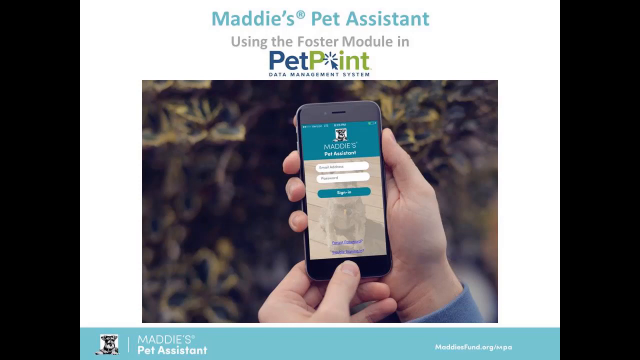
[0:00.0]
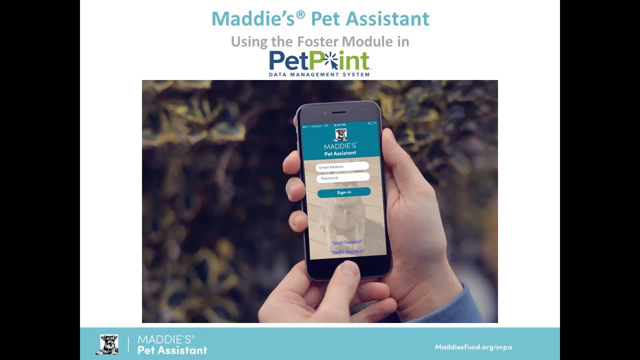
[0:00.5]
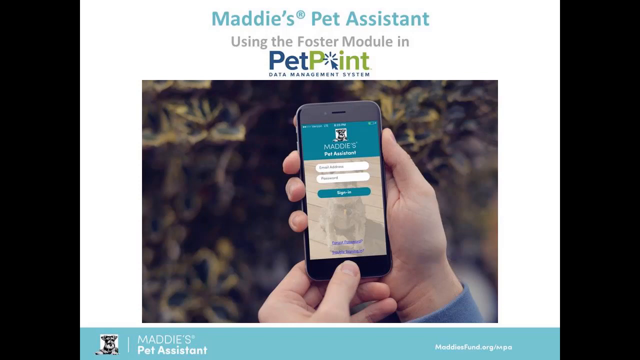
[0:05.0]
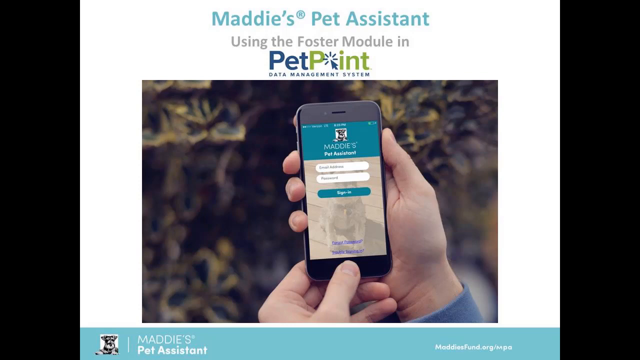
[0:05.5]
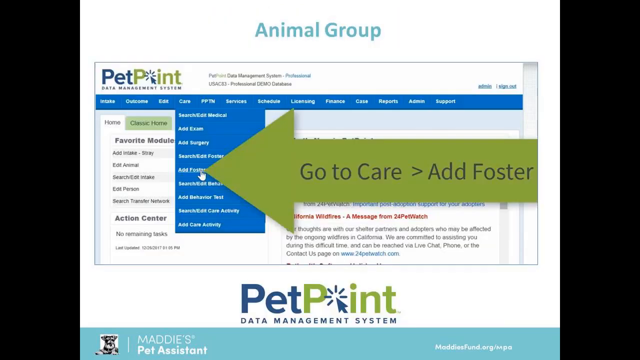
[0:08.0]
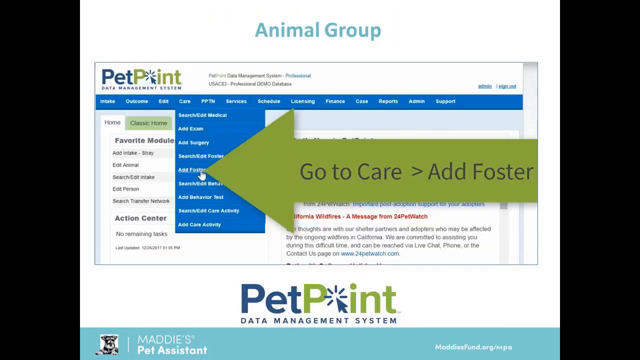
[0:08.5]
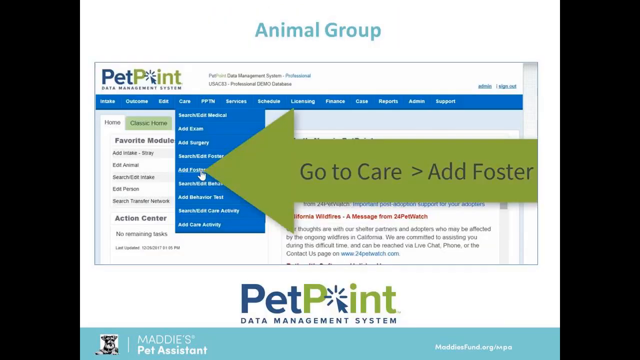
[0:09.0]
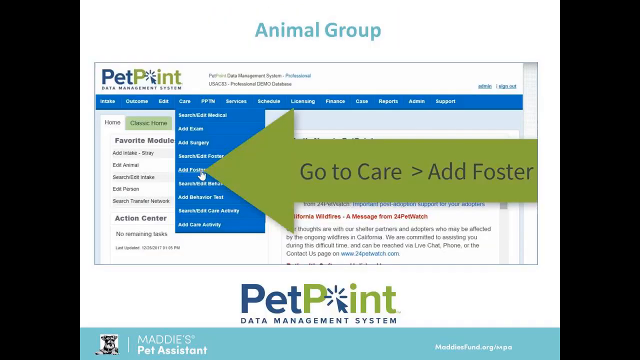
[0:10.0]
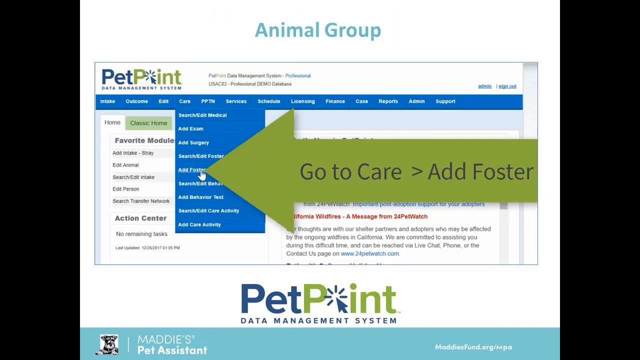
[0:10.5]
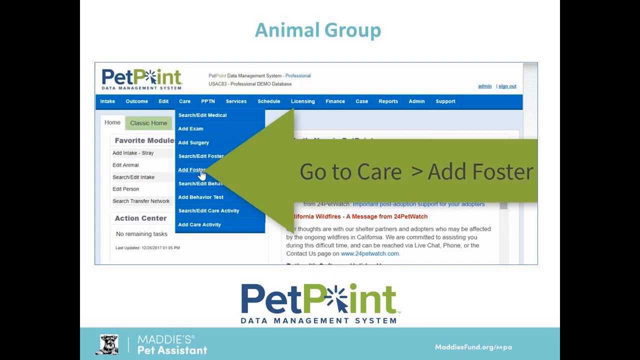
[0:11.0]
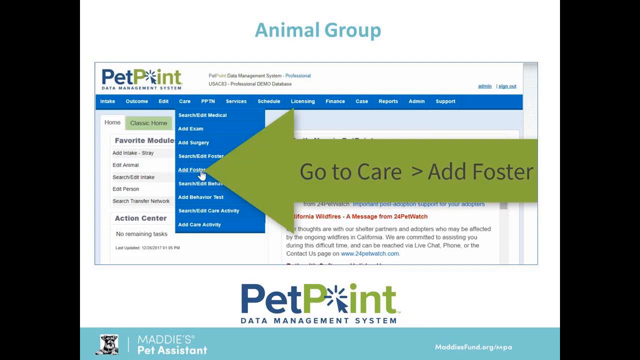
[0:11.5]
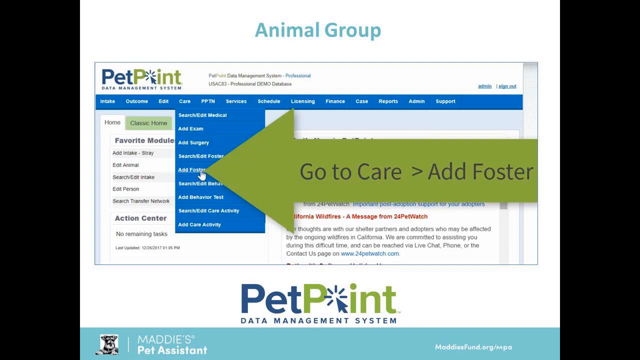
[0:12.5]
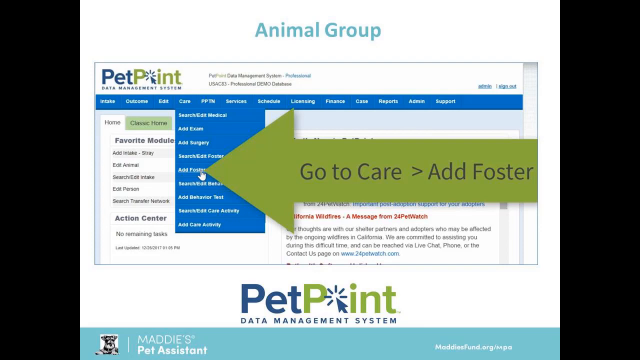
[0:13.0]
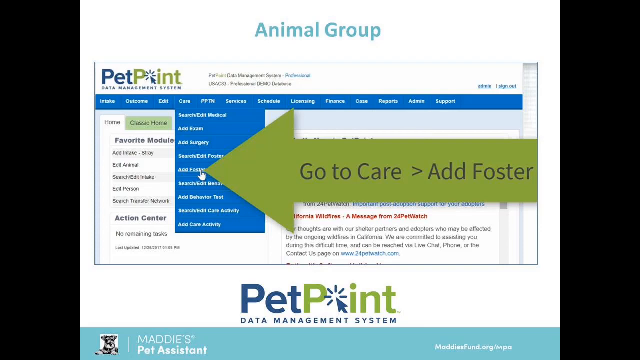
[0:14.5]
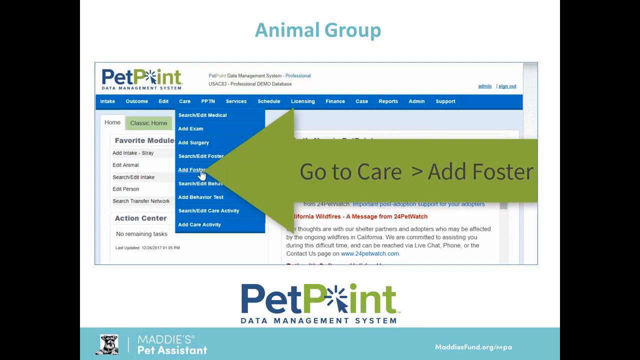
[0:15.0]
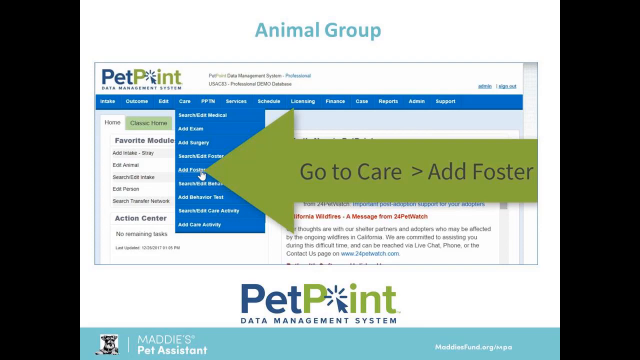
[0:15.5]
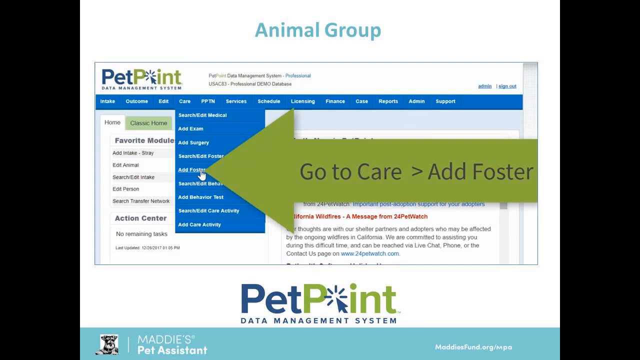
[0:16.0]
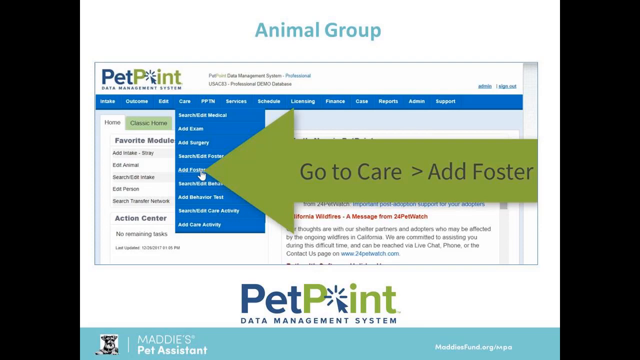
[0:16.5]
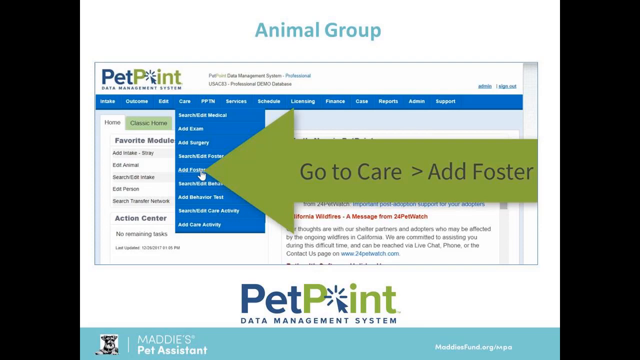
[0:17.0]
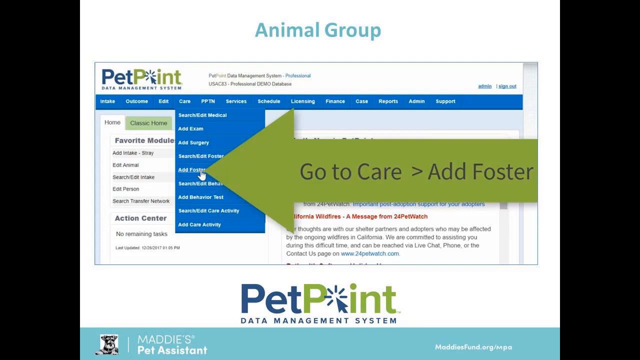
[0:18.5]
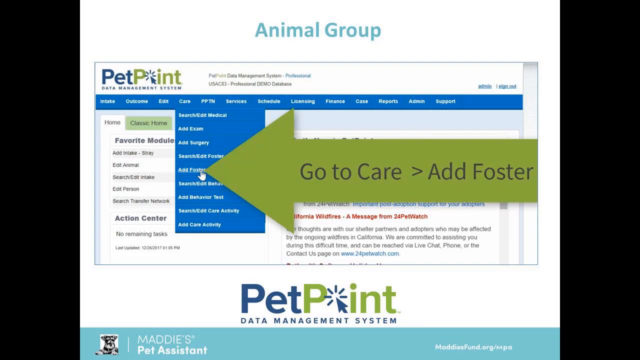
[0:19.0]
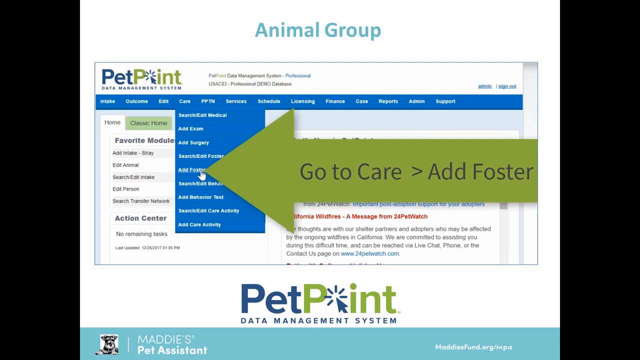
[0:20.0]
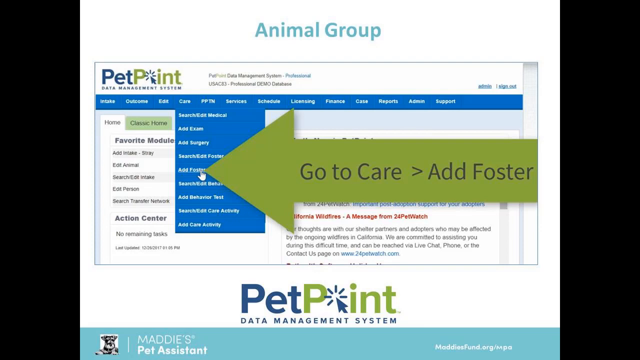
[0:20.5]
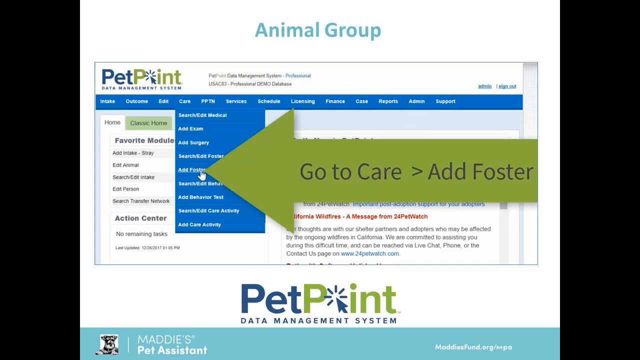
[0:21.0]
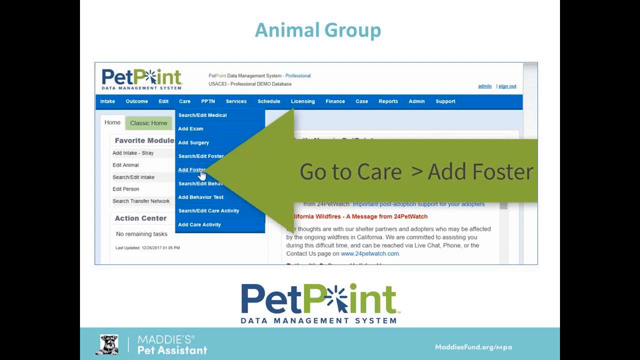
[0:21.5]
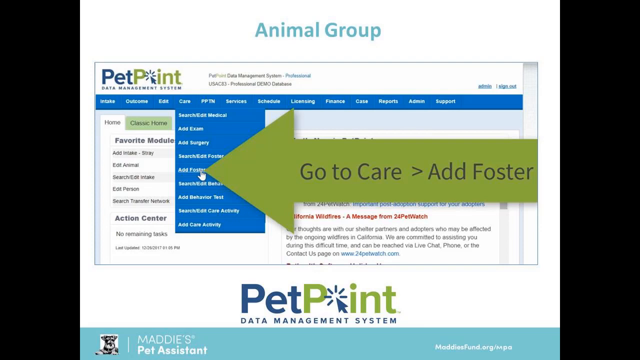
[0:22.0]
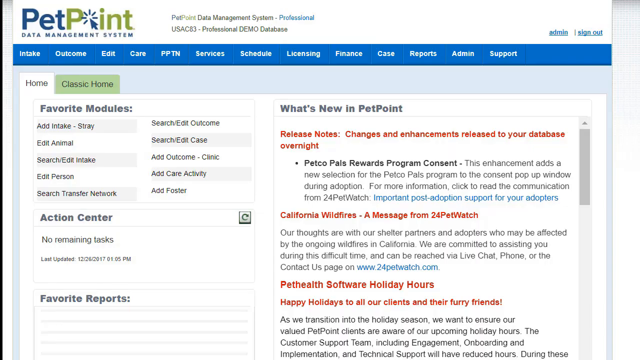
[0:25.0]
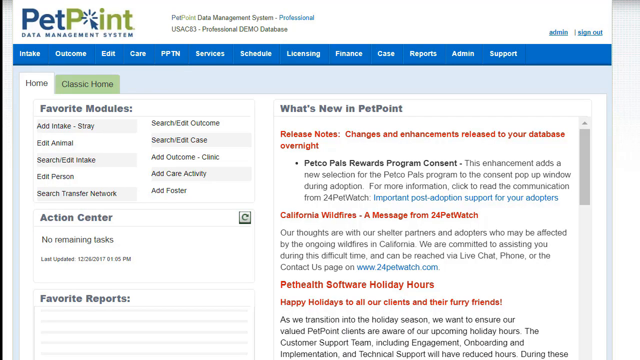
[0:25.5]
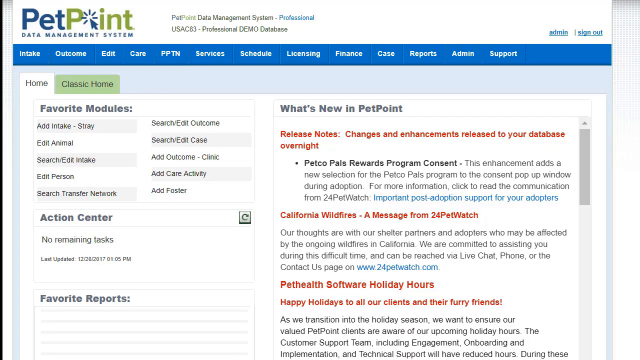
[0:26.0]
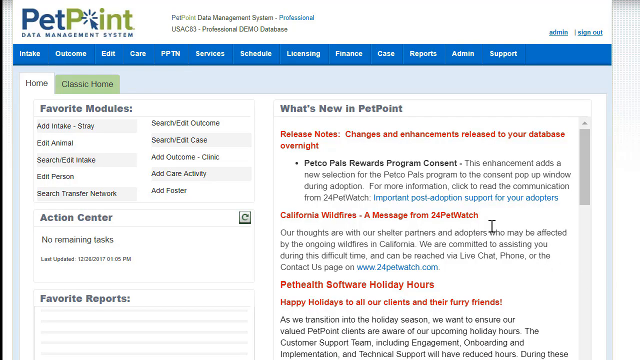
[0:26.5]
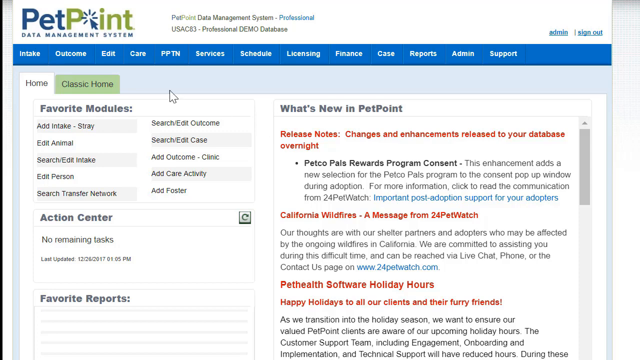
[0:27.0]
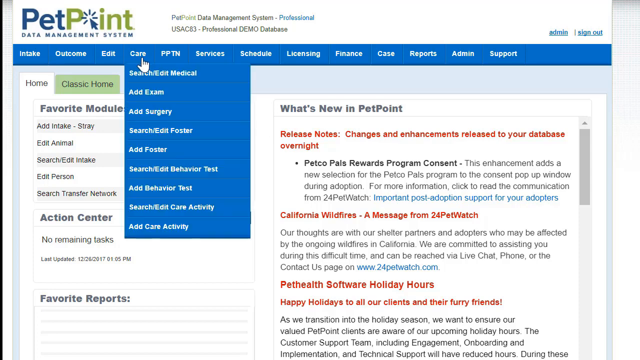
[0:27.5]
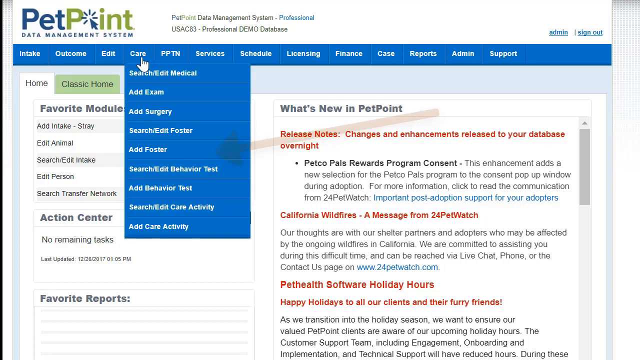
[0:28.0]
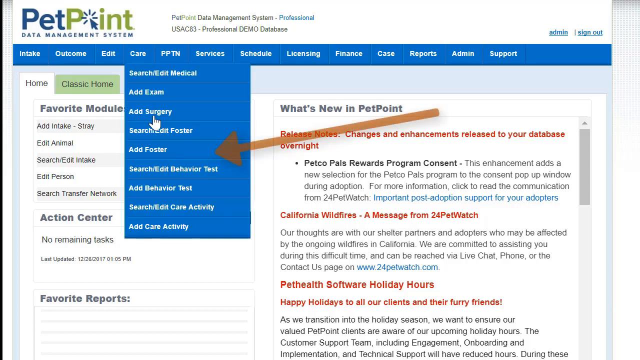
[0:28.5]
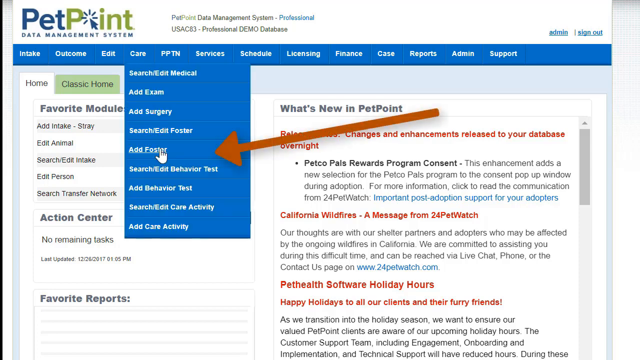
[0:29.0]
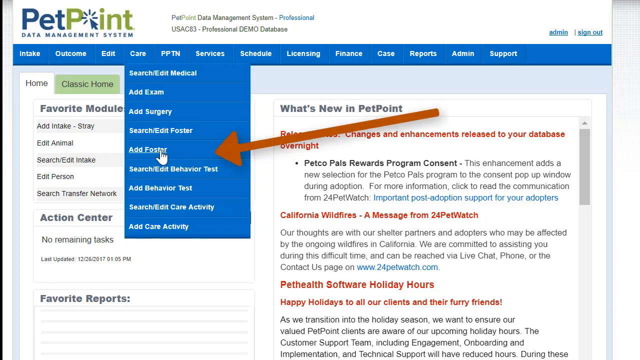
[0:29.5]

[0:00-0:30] The video opens on an image of someone holding a phone in their hand with an app open called Maddie's Pet Assistant, showing a sign-in page that asks for an email address and a password, with a sign-in button. Above this picture, text reads "Maddie's Pet Assistant using the foster module in PetPoint data management system," and a website at the bottom of the screen reads "maddiesfund.org." The screen changes to a screenshot of the PetPoint website, labeled "animal group" at the top. Beneath that is what looks like a screenshot of the browser in which the drop-down menu under the Care option in the top navigation menu is open and the cursor hovers over the Add Foster link. A big olive-green arrow points to the Add Foster option in the drop-down menu, with text on the arrow reading "go to care > add foster." The screen then changes to what looks like the PetPoint website's home page, with "What's New in PetPoint" news in the right side panel and two tabs in the left side panel, one reading "Home" and the other "Classic Home." The top navigation menu matches the one in the screenshot. The mouse cursor hovers over the Care option in the top menu and moves down to Add Foster, where a red arrow also points, and the user seems to click it.